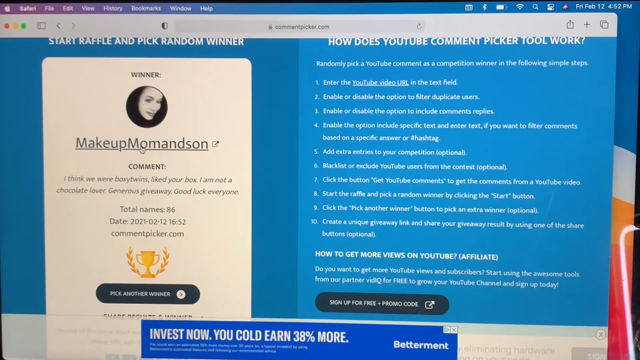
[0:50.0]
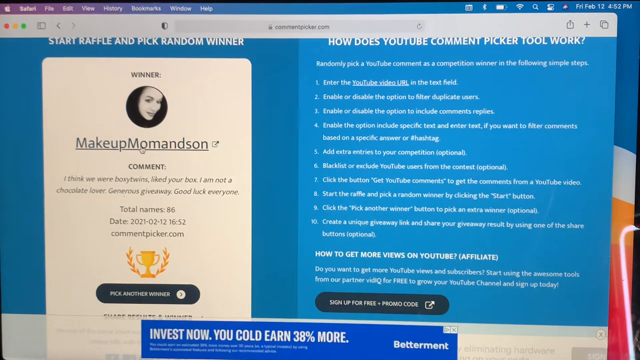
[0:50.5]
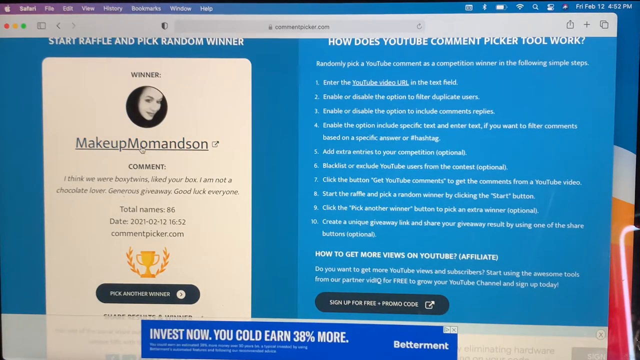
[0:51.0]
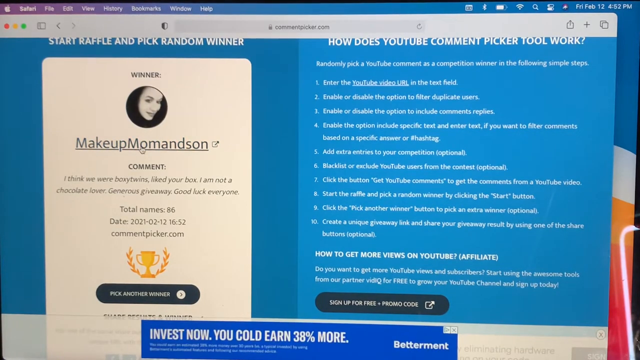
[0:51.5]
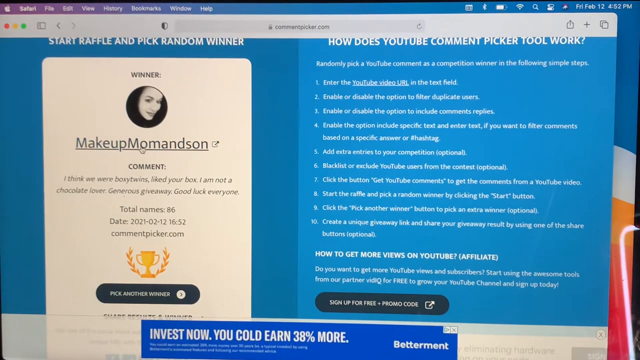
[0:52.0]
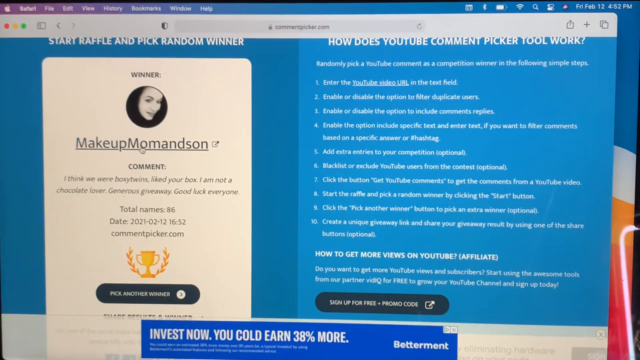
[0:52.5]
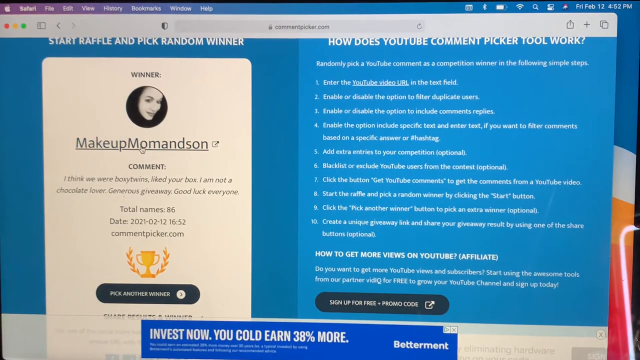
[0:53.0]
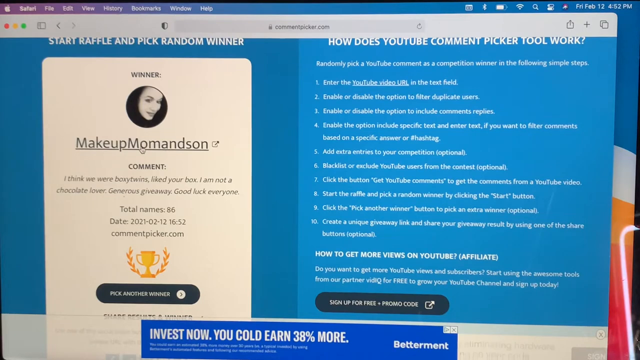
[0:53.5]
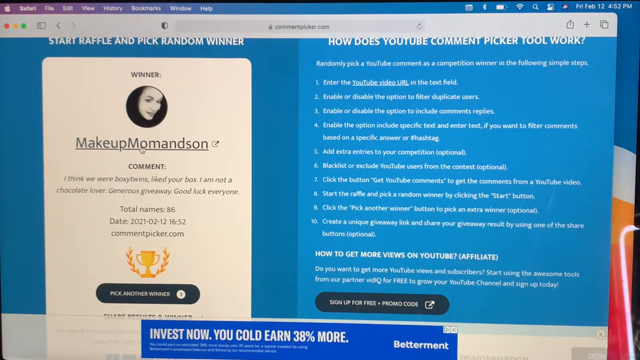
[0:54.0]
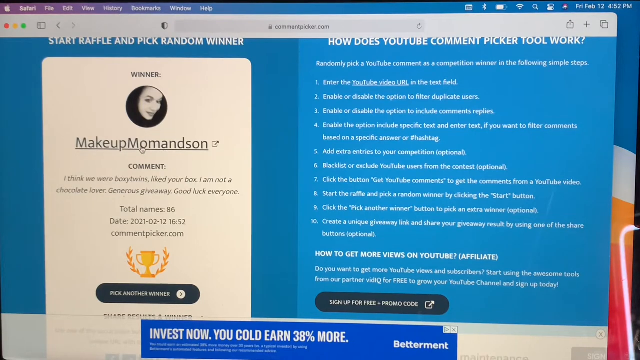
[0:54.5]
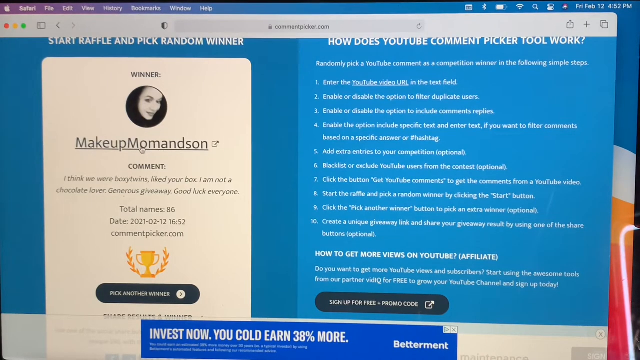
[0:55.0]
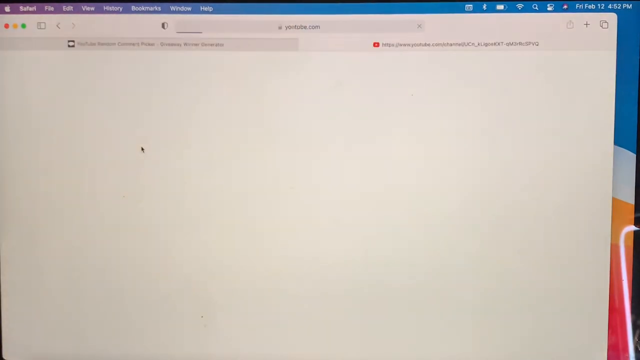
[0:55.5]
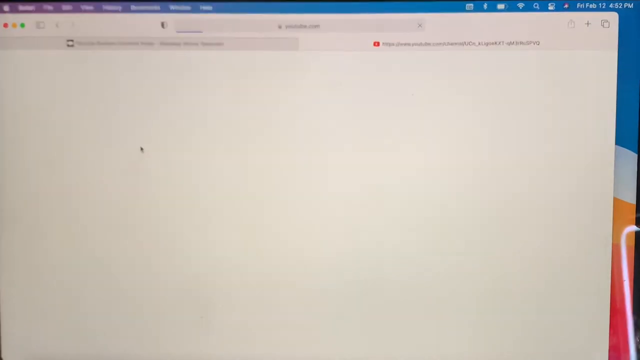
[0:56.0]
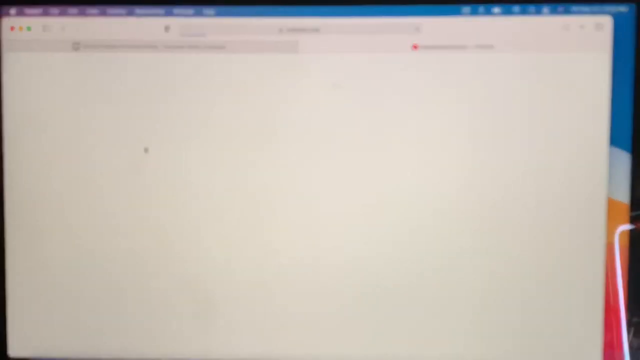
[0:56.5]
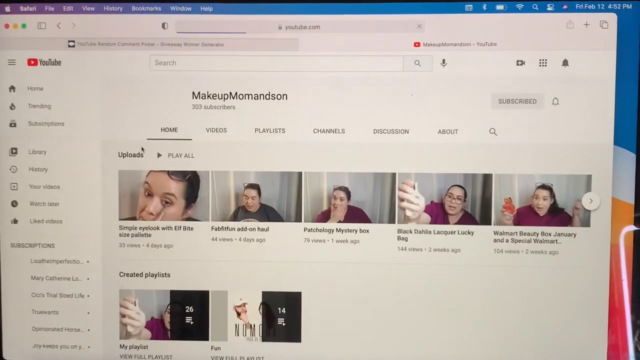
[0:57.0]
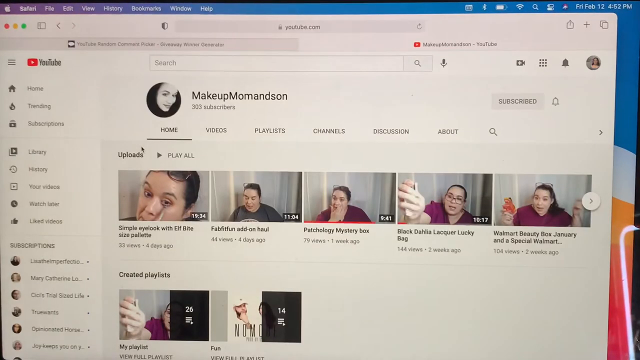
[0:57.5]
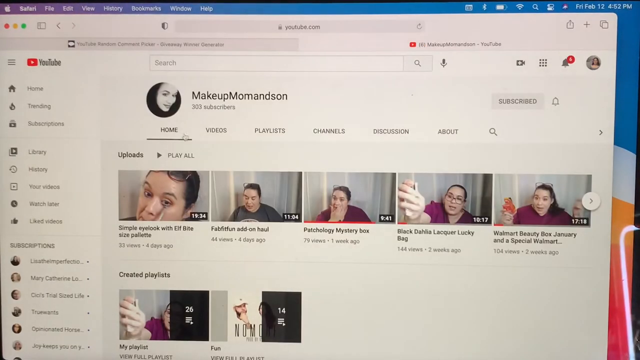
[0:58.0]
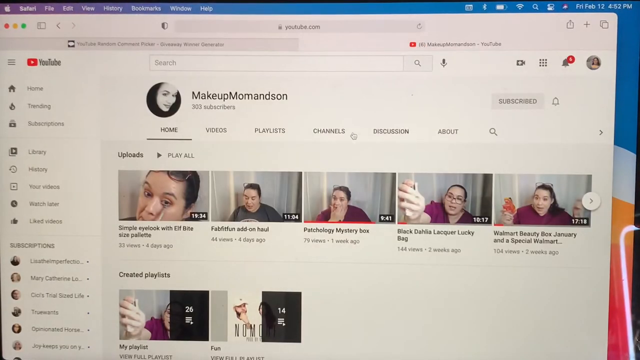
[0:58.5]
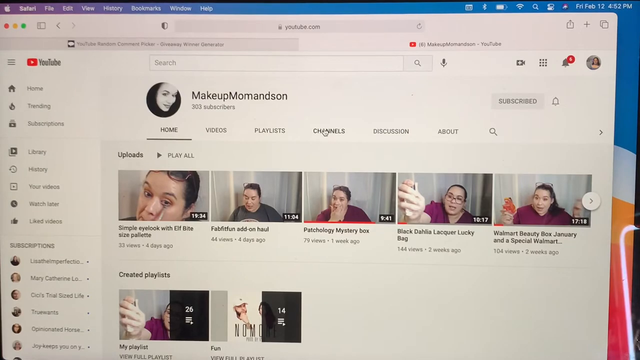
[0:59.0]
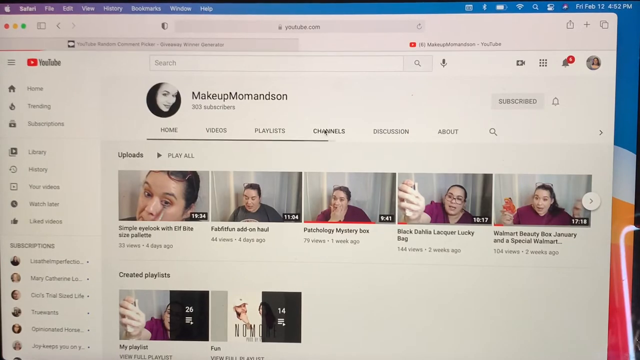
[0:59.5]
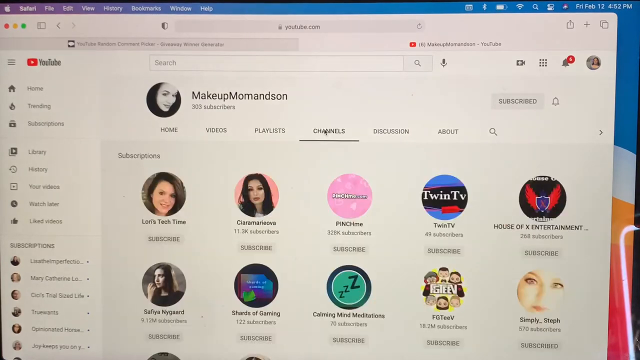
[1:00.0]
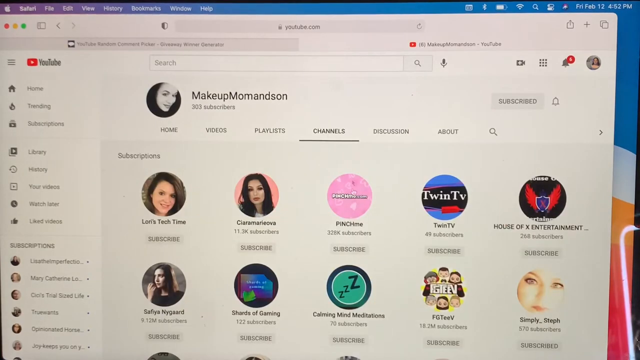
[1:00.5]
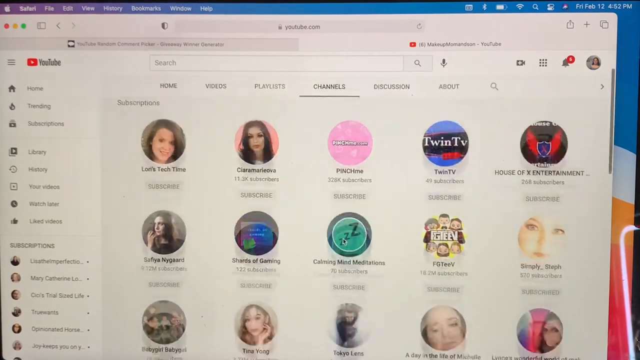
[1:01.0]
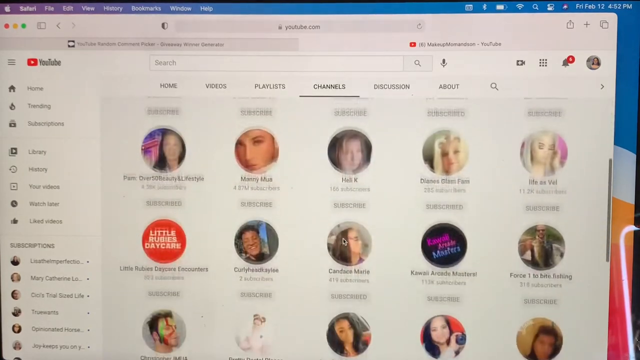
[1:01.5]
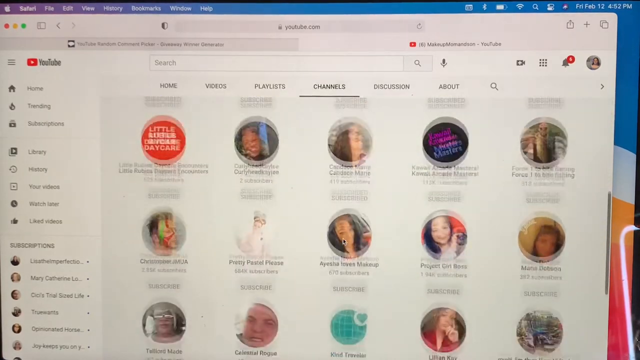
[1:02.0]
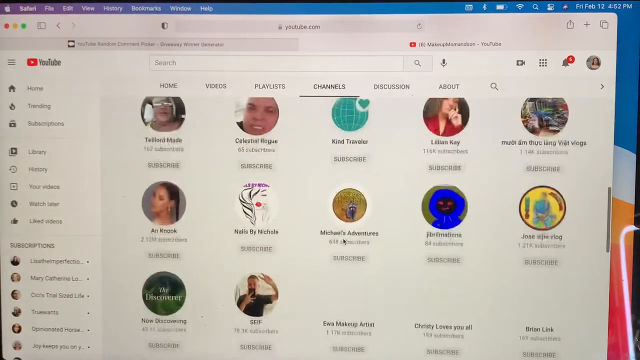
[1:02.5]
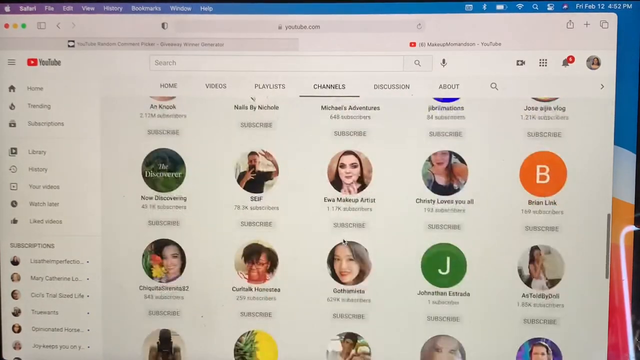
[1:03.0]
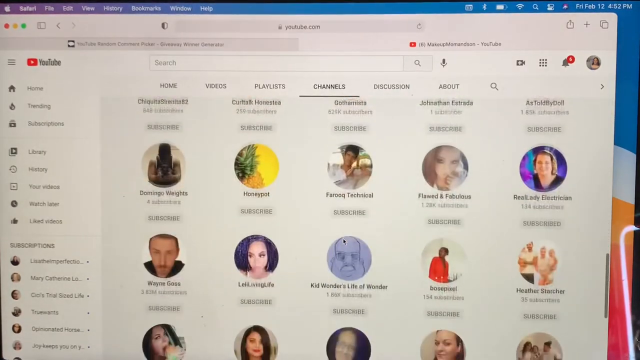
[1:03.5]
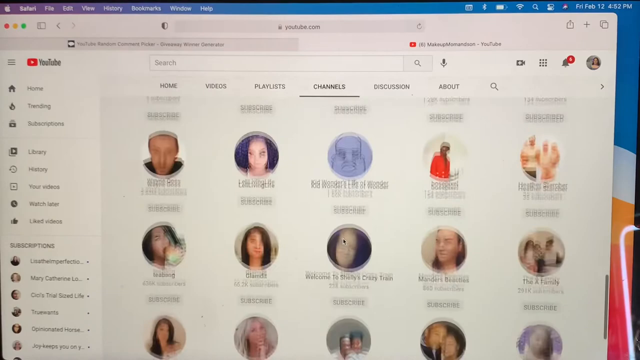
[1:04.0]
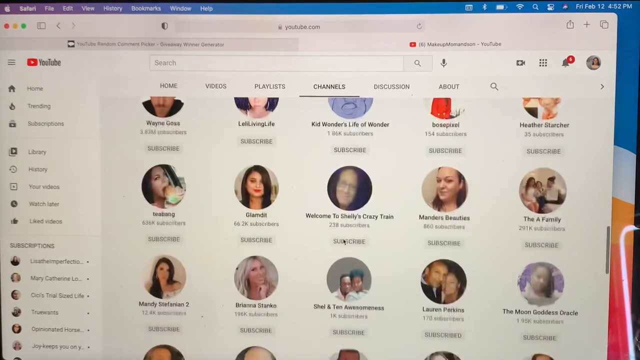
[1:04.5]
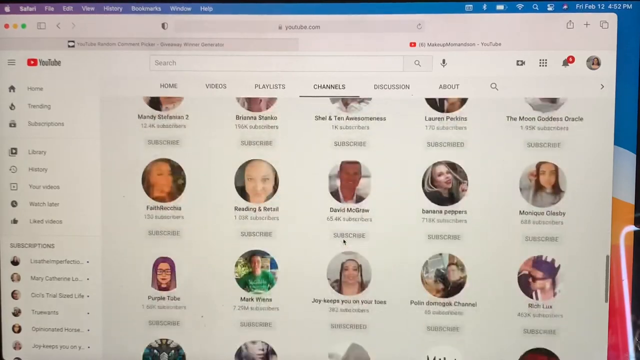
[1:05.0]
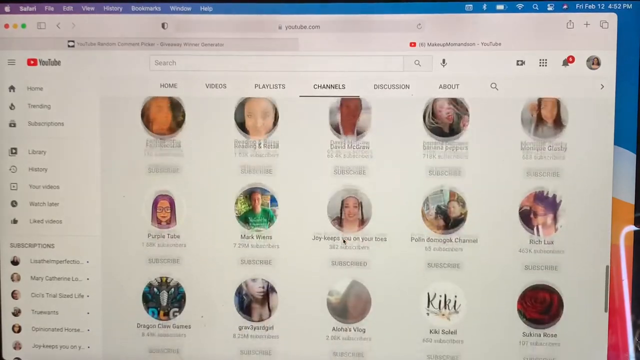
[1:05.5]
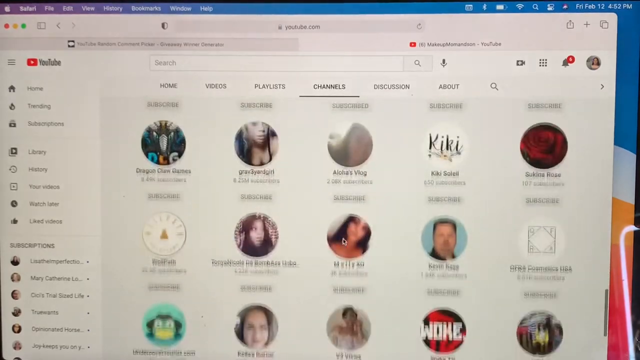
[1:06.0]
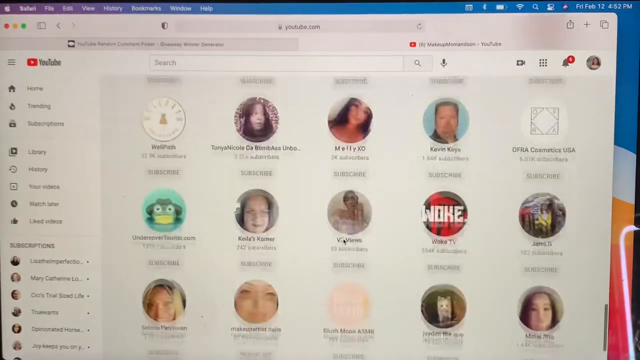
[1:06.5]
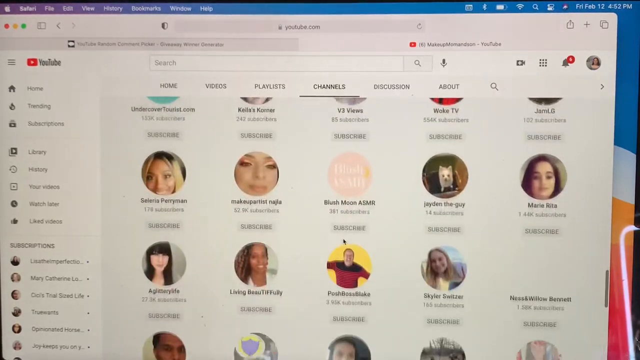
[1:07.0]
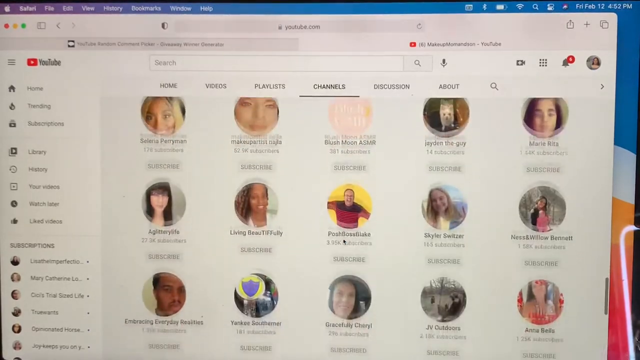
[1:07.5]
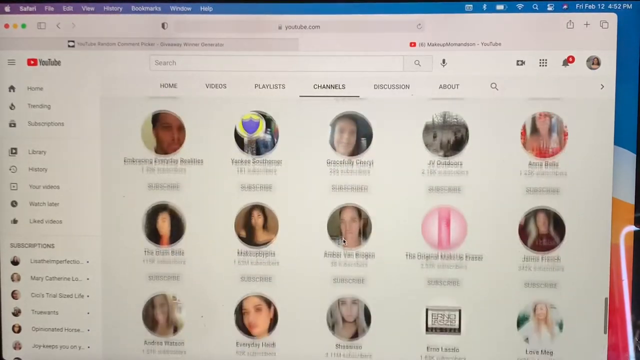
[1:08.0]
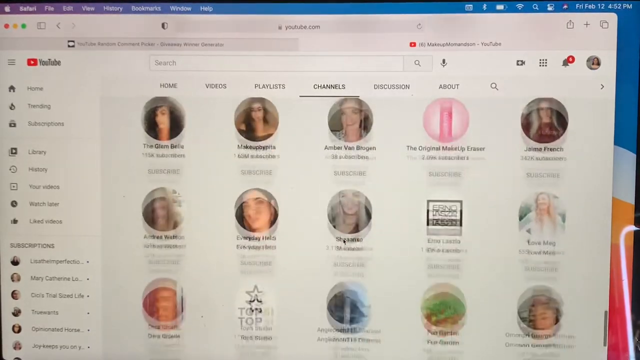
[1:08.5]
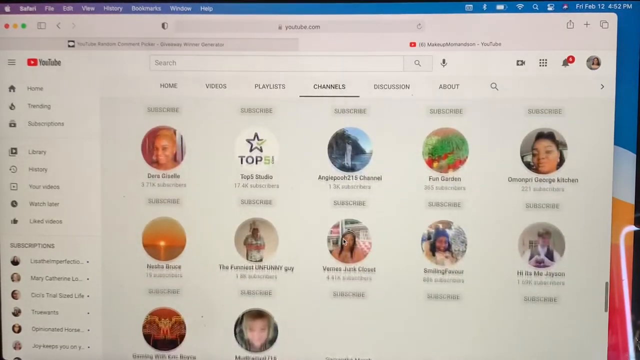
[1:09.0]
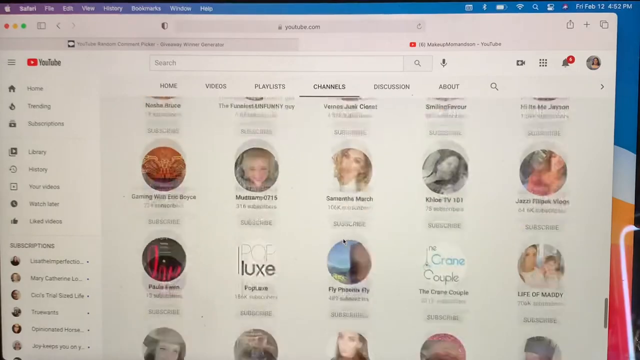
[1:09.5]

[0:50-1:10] An Apple computer screen, identifiable by the navigation bar at the top, shows a browser reading commentpicker.com at the top. On the blue background, on the left side, is "start raffle and pick random winner," with a profile picture and the name "make up mom and son," whose avatar looks like a black-and-white face of a woman. The mouse cursor goes over "make up mom and son," turns into a little hand, and clicks, opening a new tab. The new tab looks like a YouTube profile page for make up mom and son, with 303 subscribers. Headers below read "home, videos, playlist, channels, discussion, about." The cursor goes to channels and clicks it; the tab reads "subscriptions." The page scrolls down through many rows of circular avatars, five in each row, and keeps scrolling down.